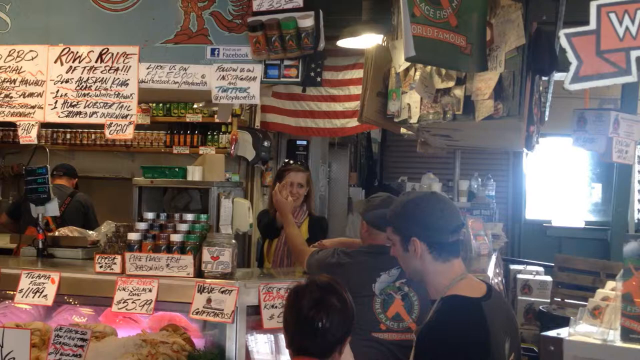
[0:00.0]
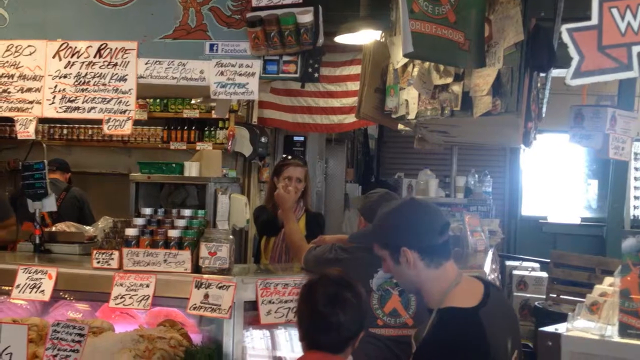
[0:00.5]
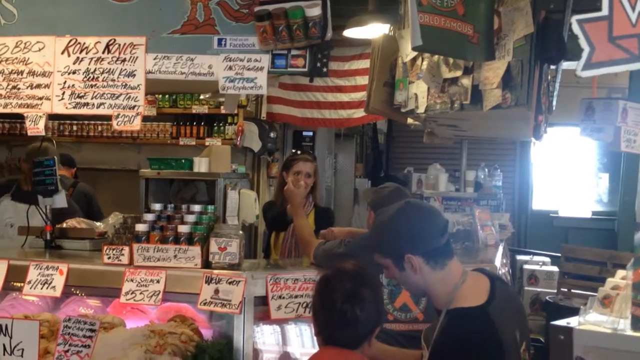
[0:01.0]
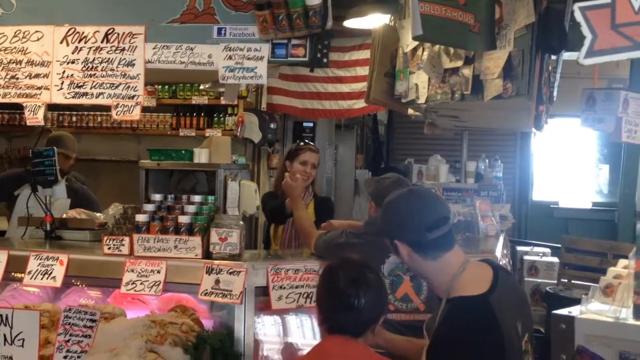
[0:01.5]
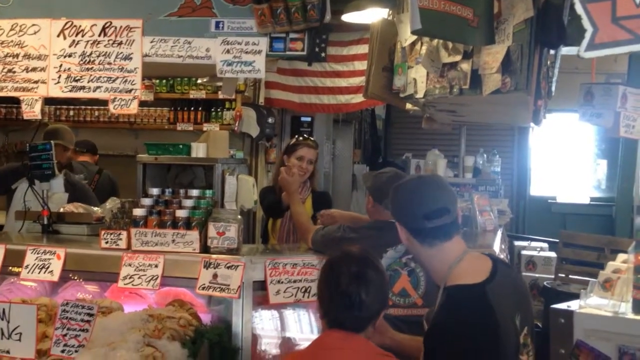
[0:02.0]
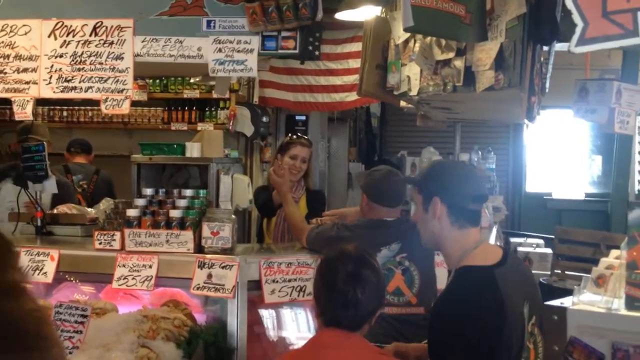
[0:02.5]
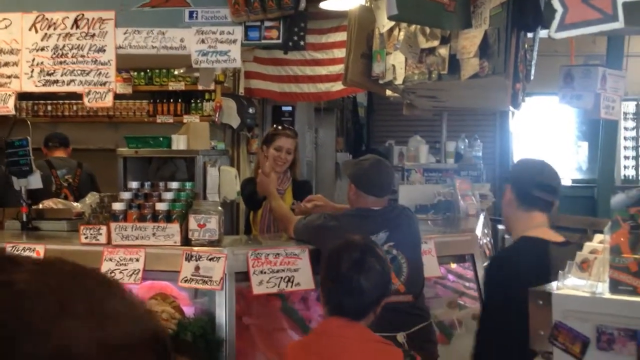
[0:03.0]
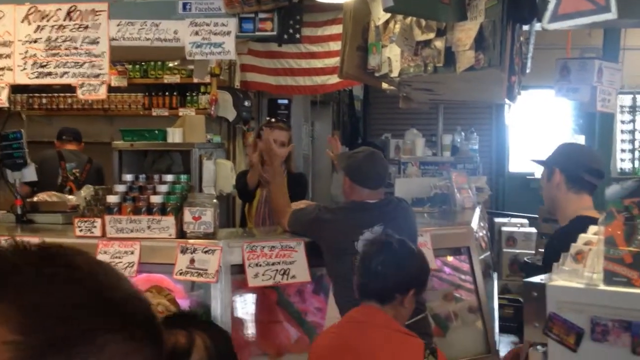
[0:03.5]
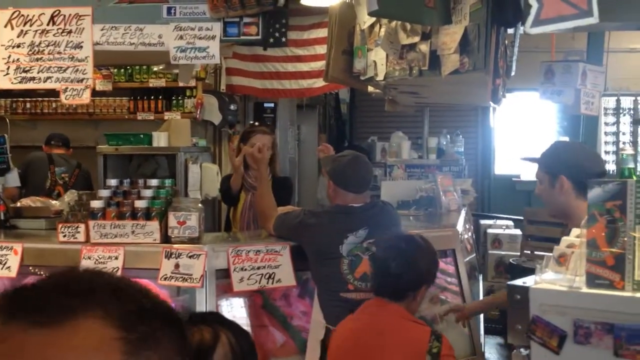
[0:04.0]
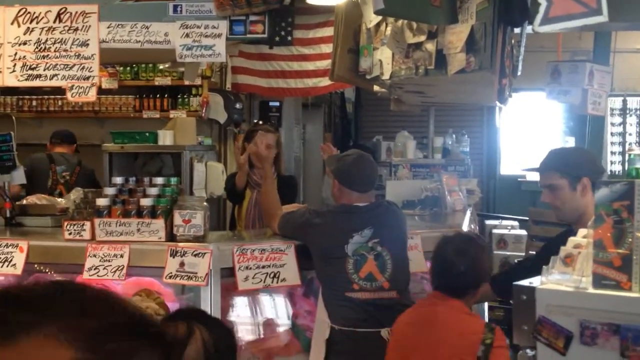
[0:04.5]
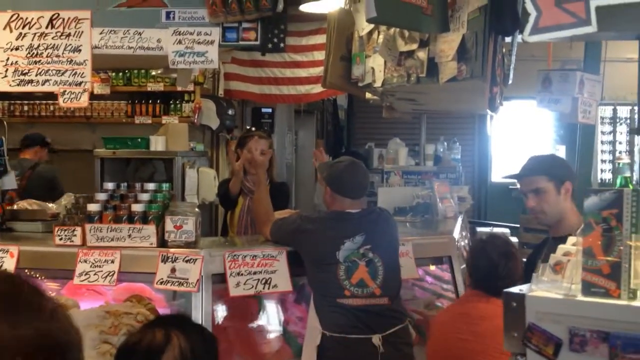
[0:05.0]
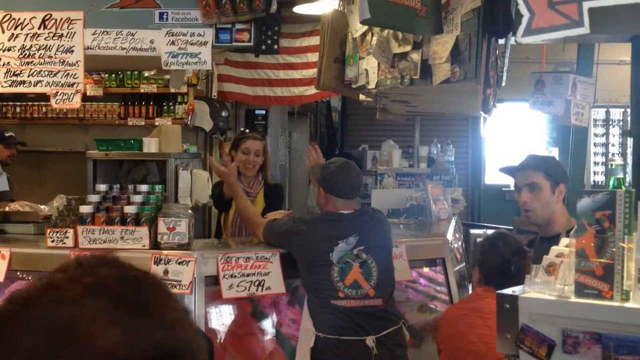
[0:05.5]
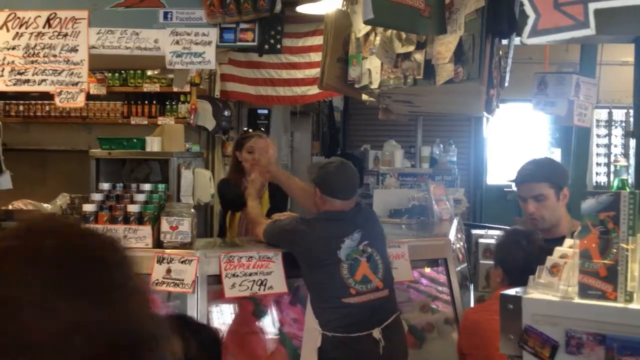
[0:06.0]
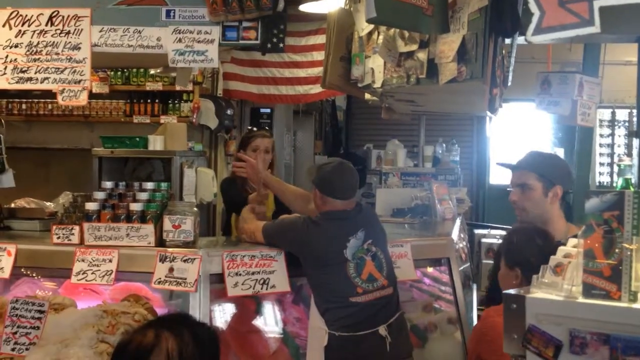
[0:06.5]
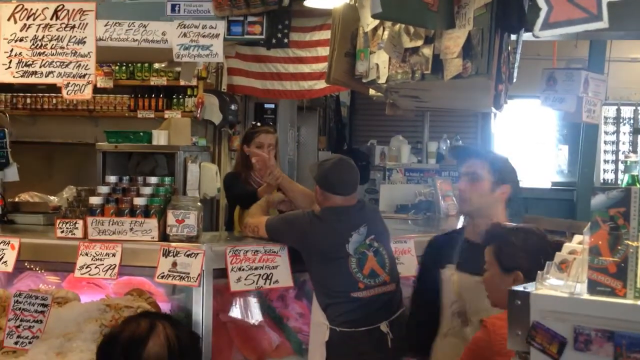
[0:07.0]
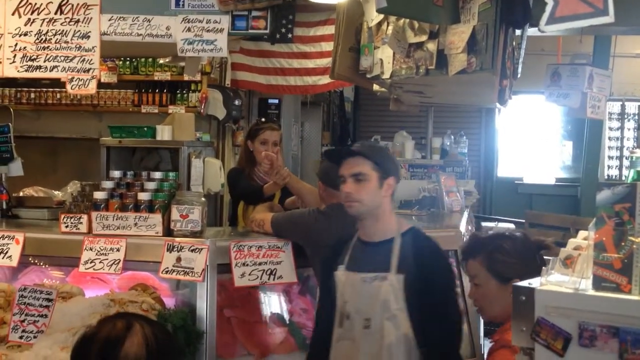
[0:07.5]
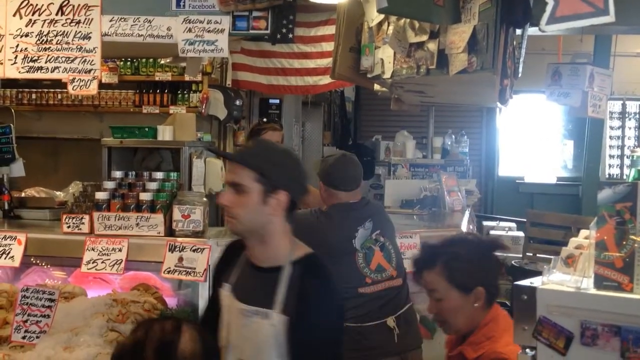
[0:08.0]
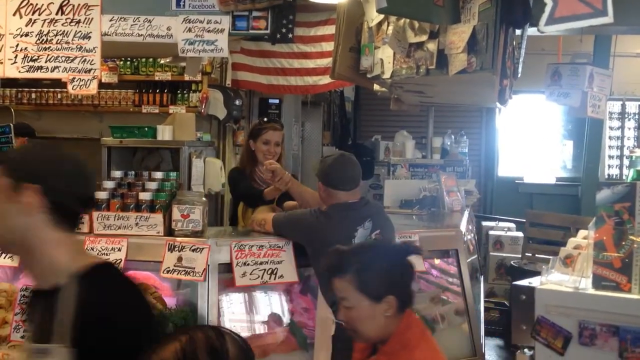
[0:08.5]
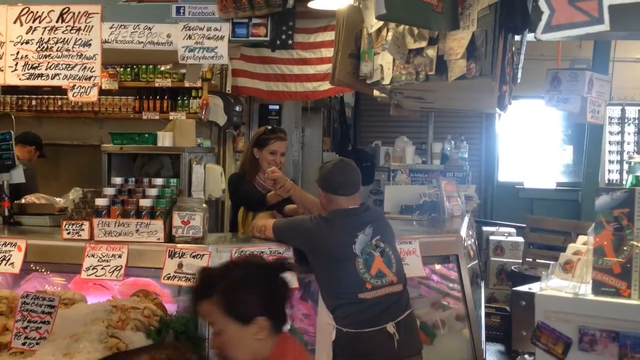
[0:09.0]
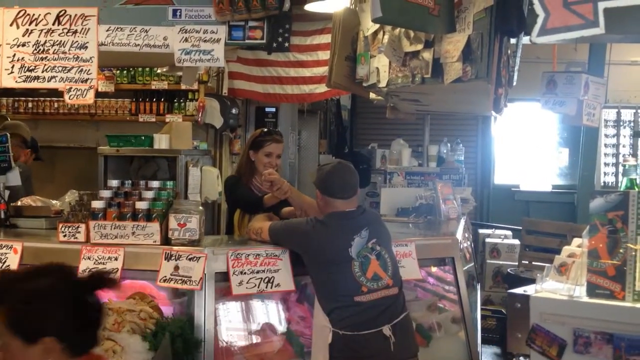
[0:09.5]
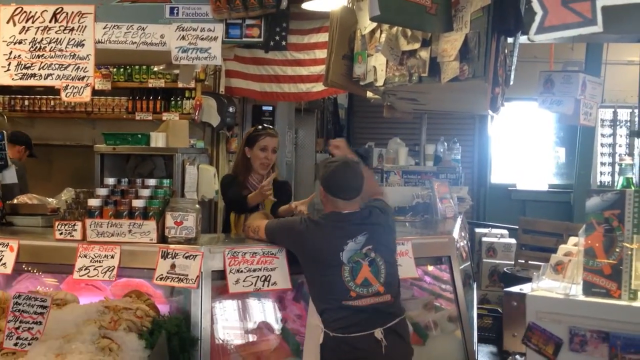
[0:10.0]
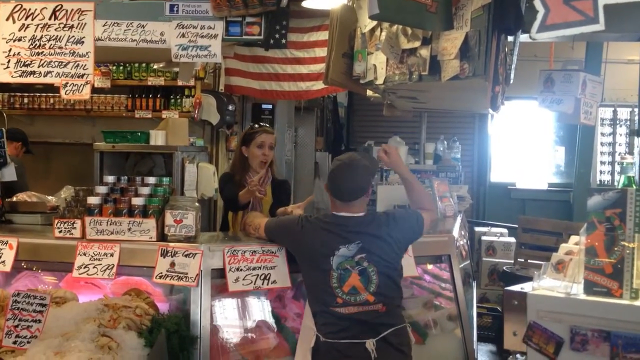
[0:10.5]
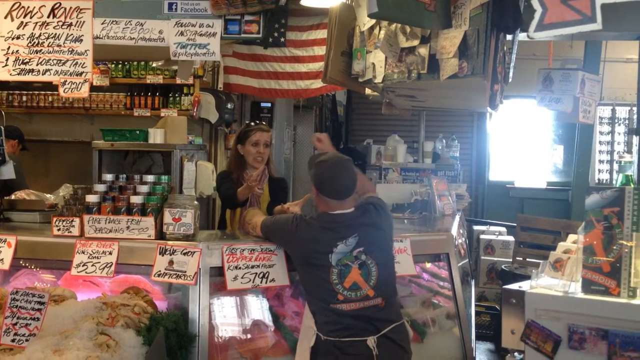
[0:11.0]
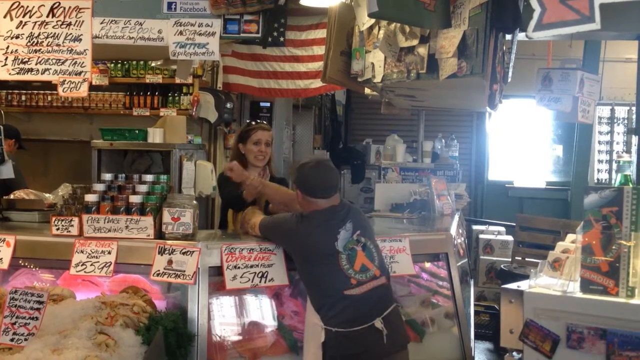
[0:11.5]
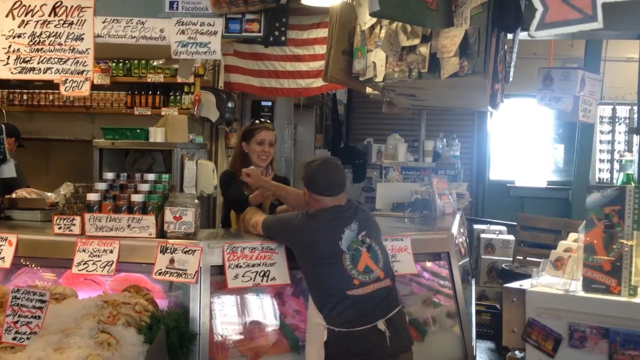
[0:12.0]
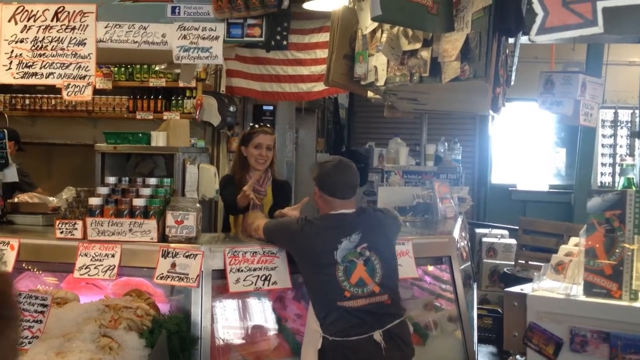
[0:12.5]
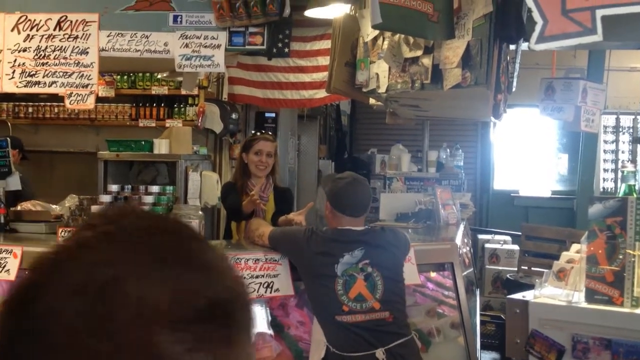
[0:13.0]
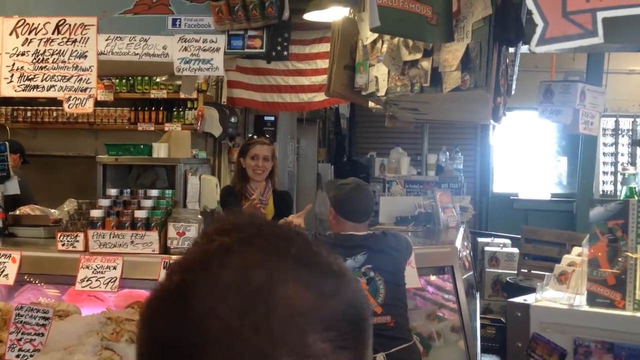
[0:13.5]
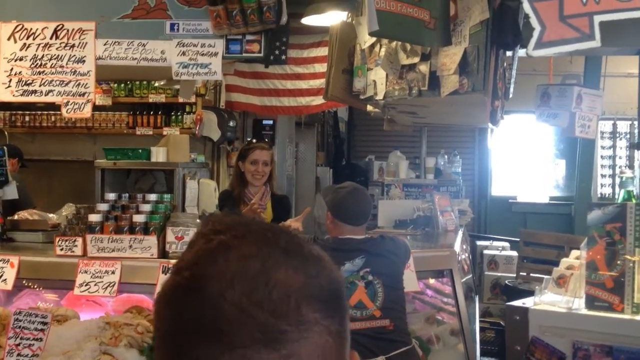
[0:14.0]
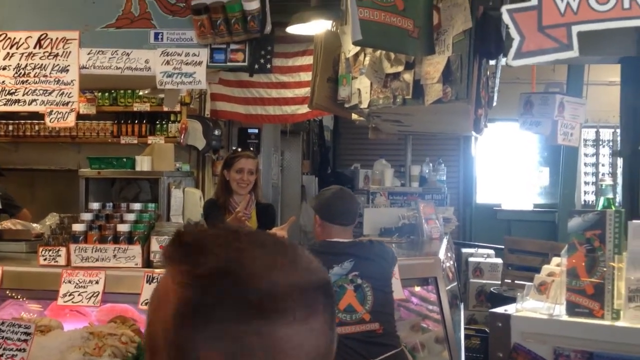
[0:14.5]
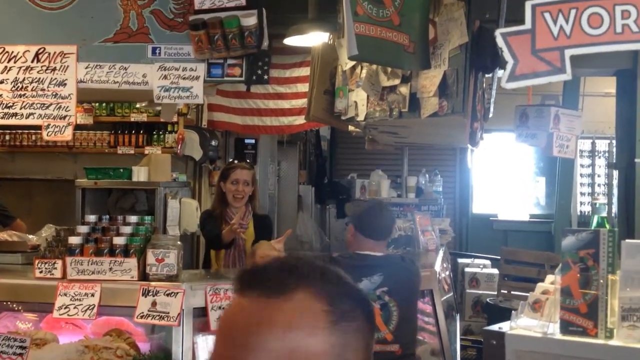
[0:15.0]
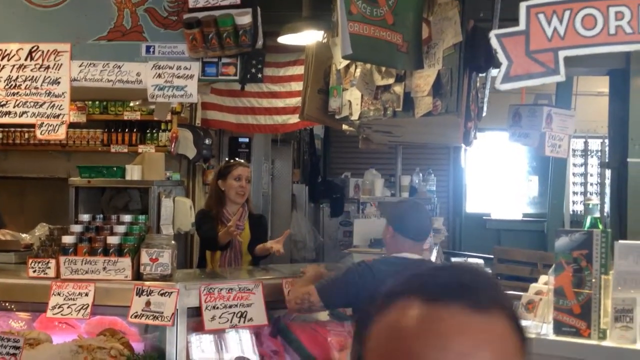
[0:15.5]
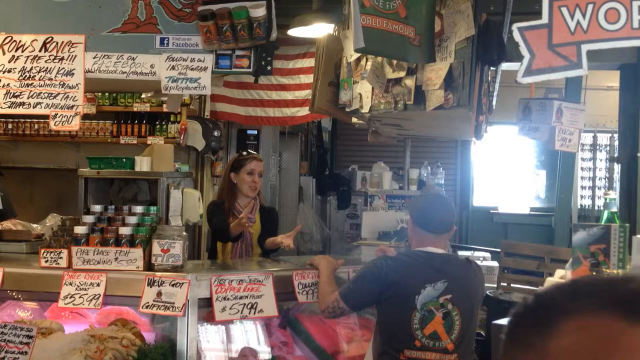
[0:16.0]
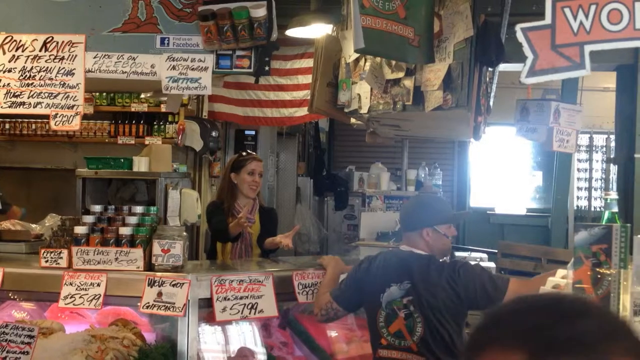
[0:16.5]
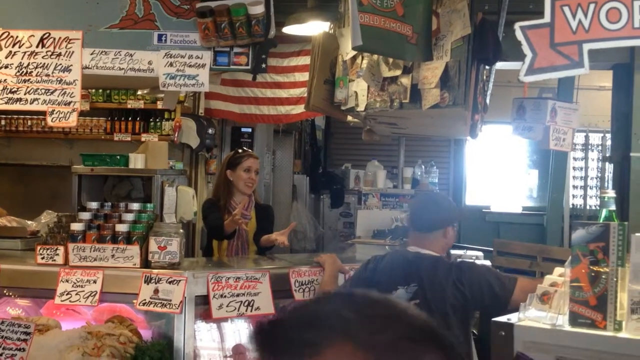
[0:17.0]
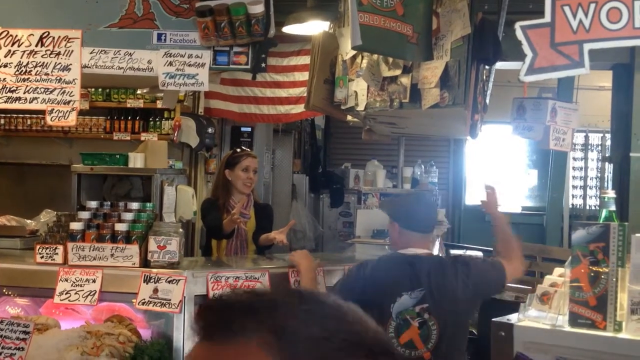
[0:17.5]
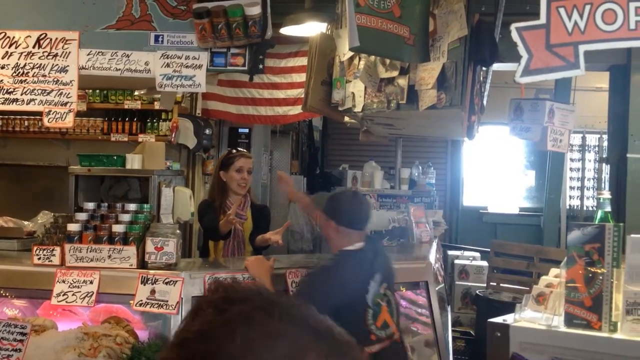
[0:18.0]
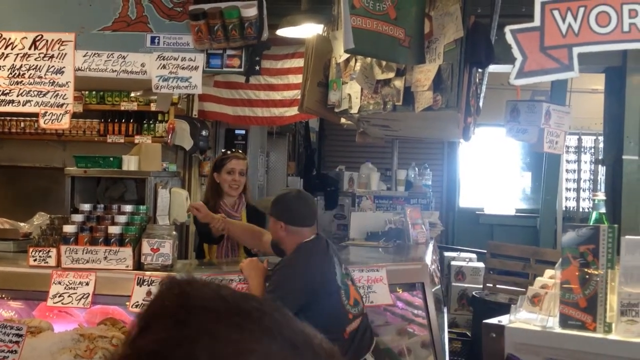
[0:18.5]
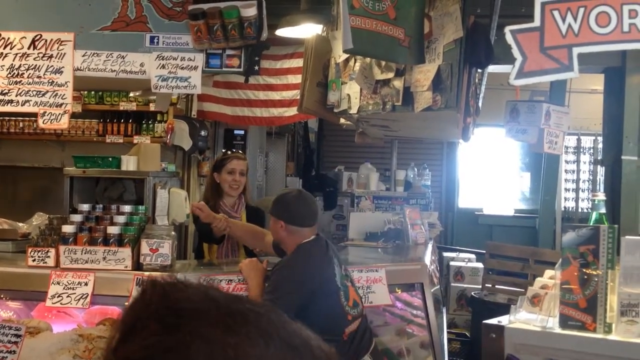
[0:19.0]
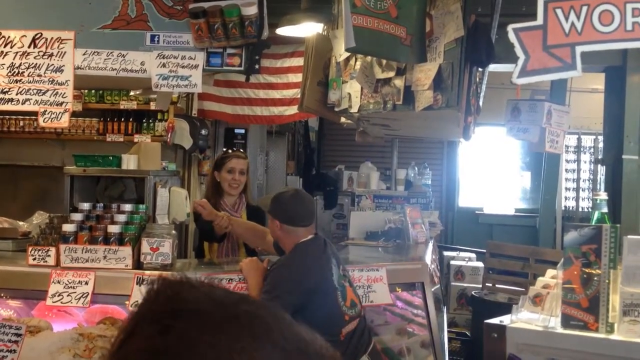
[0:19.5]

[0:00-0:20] The inside of a little food shop appears, perhaps a restaurant with an attached gift shop, with signs everywhere. An American flag hangs behind the cashier, behind the cash register, and in front of that are MasterCard and Discover signs. One sign apparently says "Rose Royce of the Sea" and mentions lobster and king crab, while the sign next to it says something about barbecue. Lots of handwritten signs cover the food case in front of the cashier. A cook is in the back toward the cooktop. People mill around in the foreground, and the focus is on a man in front of the counter who is playing some sort of arm-hand game with the cashier behind the counter. The scene looks very busy.